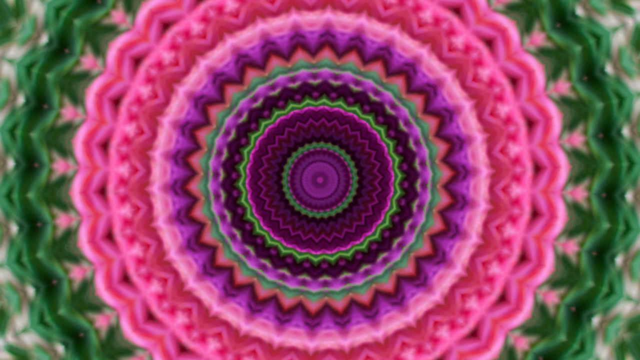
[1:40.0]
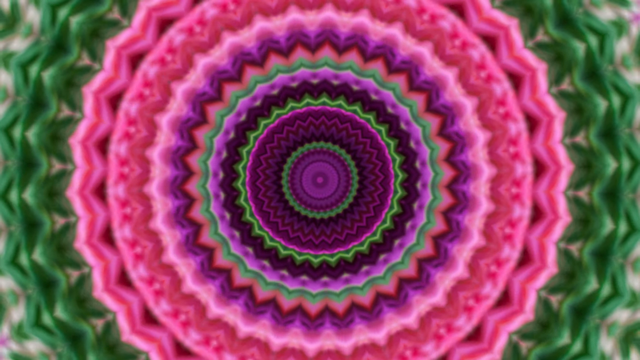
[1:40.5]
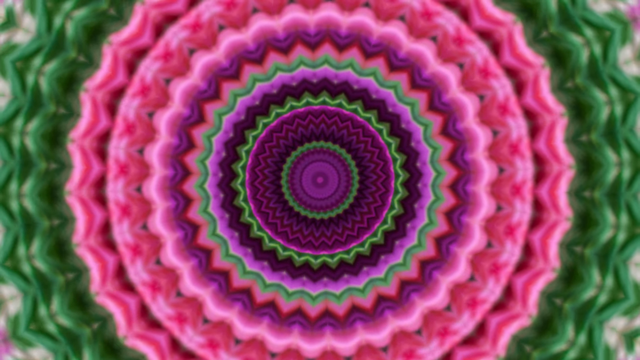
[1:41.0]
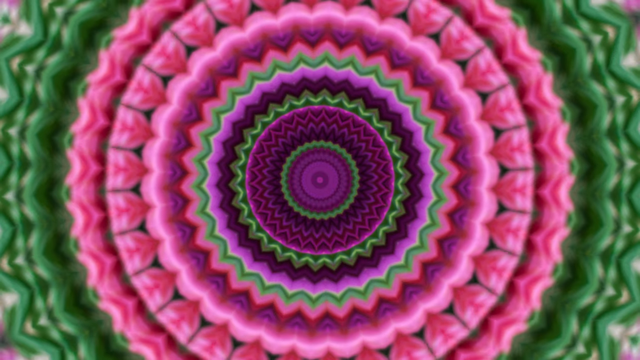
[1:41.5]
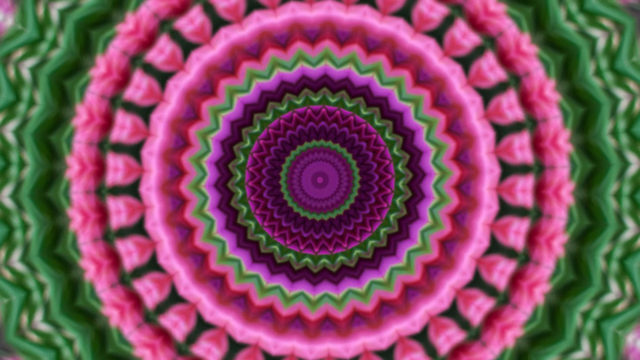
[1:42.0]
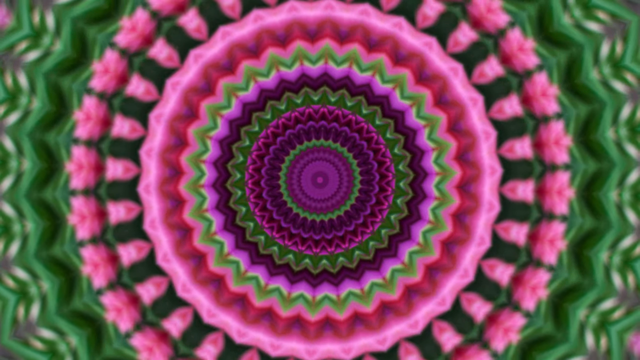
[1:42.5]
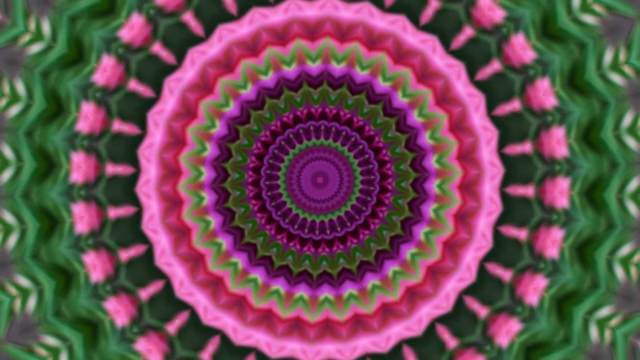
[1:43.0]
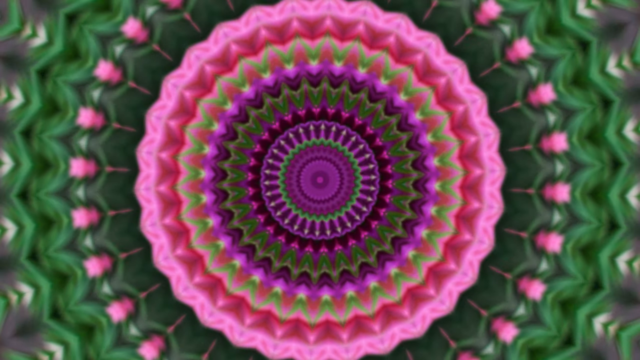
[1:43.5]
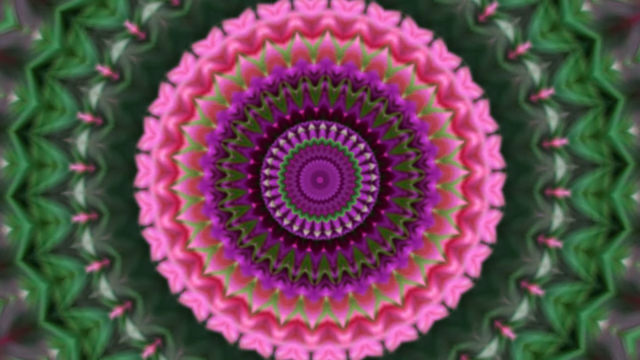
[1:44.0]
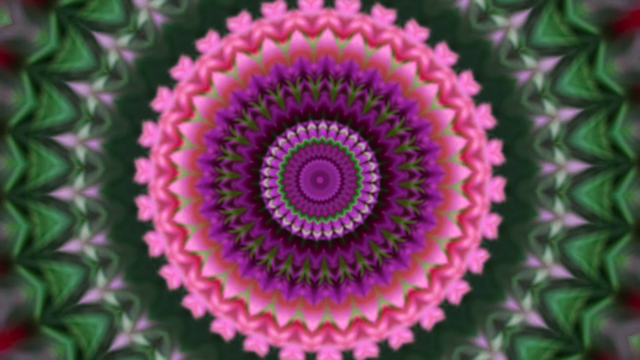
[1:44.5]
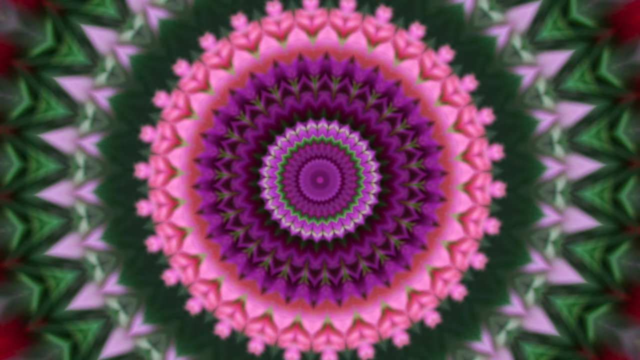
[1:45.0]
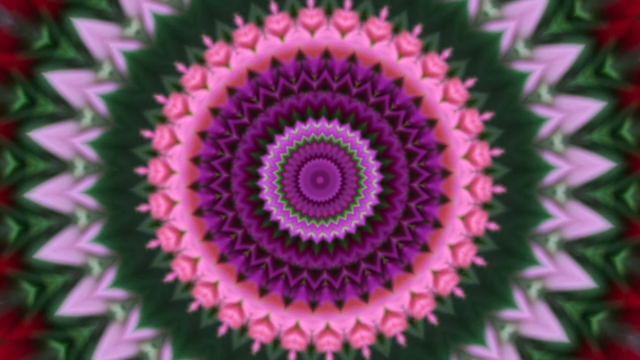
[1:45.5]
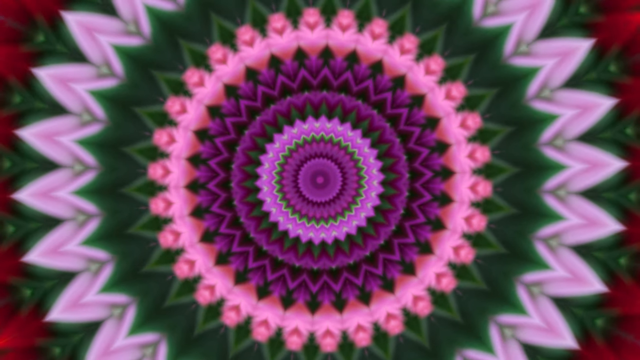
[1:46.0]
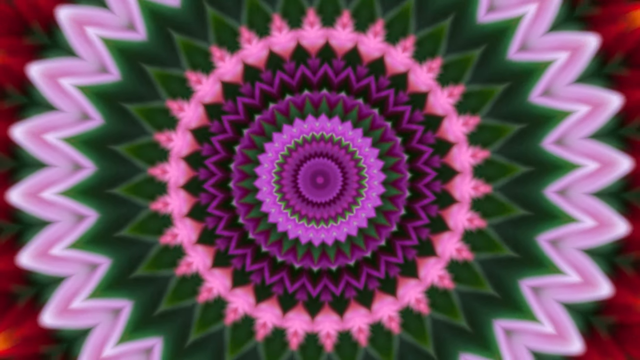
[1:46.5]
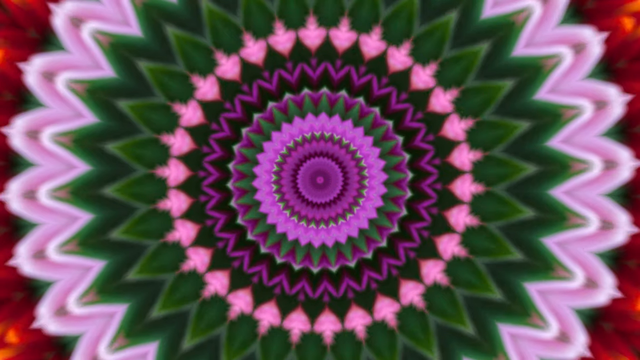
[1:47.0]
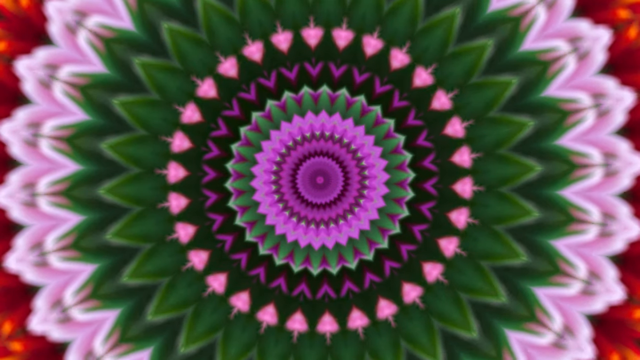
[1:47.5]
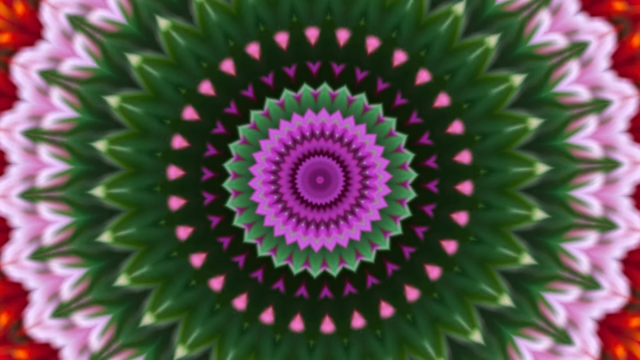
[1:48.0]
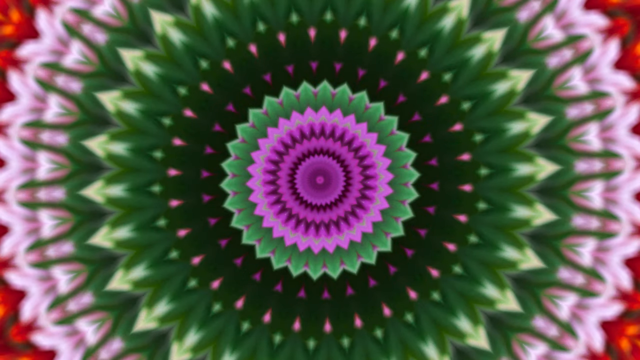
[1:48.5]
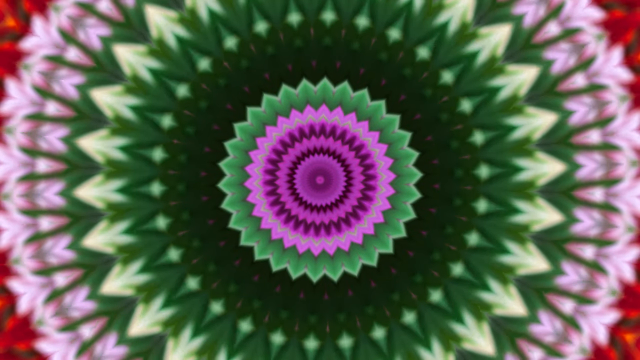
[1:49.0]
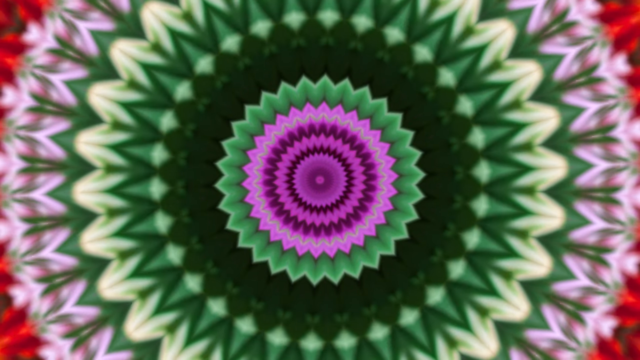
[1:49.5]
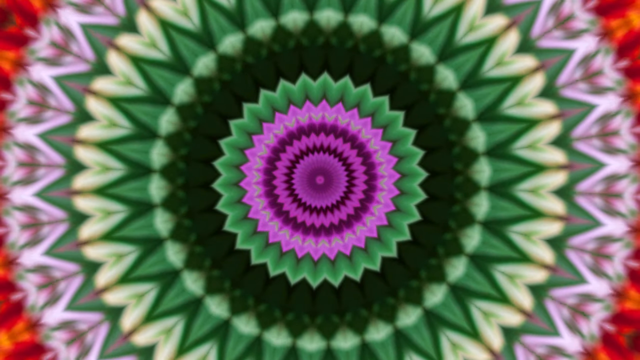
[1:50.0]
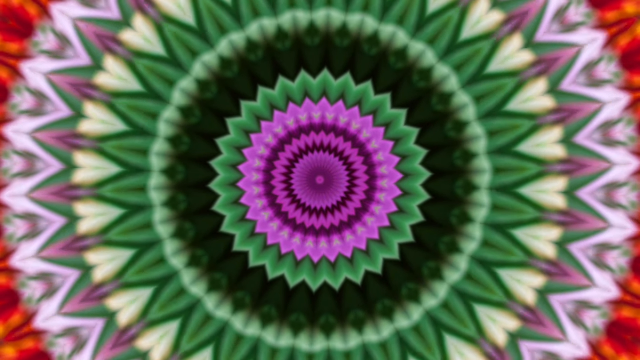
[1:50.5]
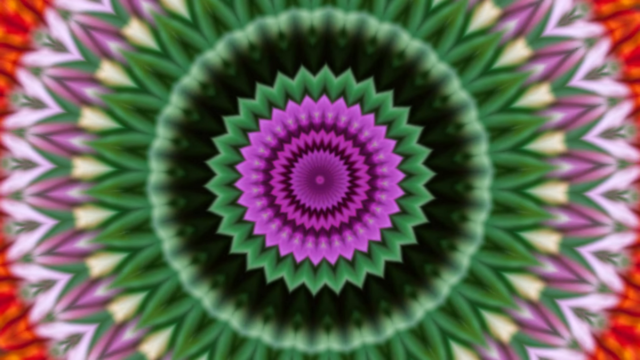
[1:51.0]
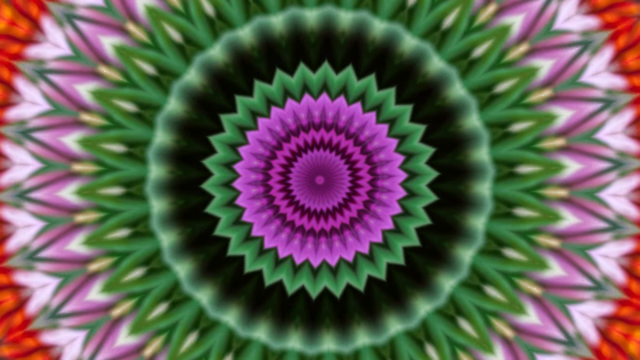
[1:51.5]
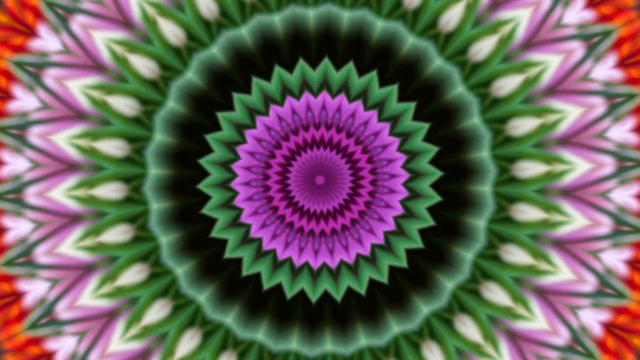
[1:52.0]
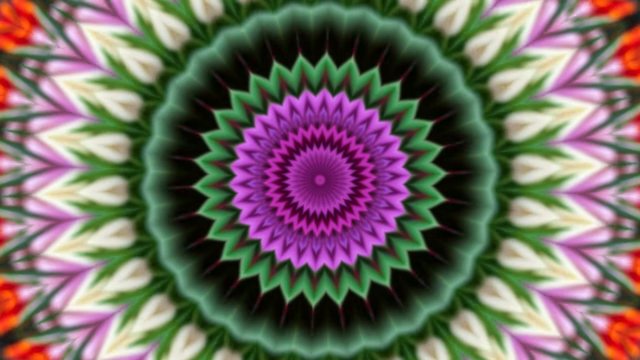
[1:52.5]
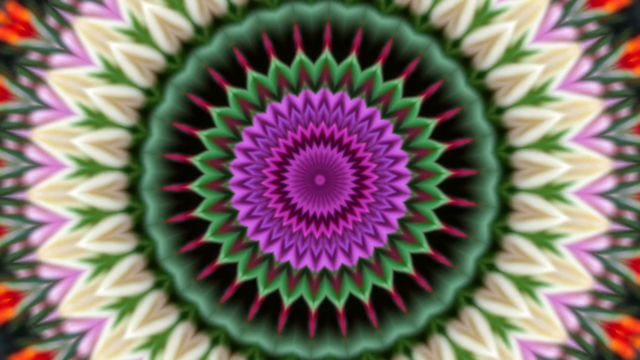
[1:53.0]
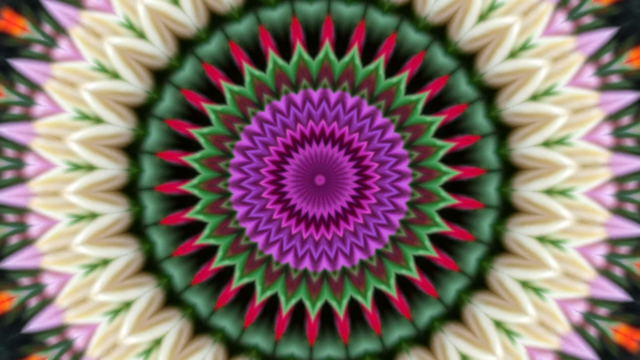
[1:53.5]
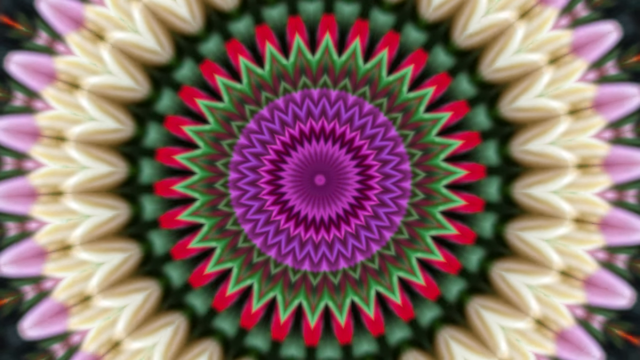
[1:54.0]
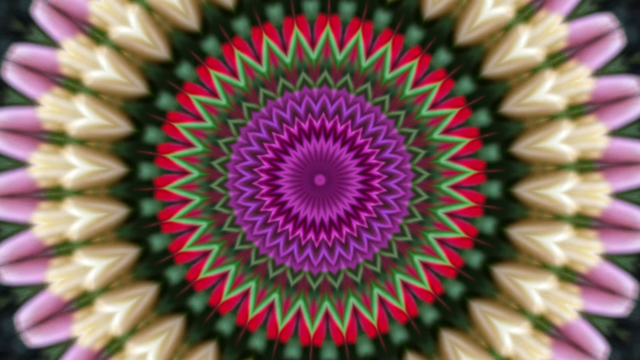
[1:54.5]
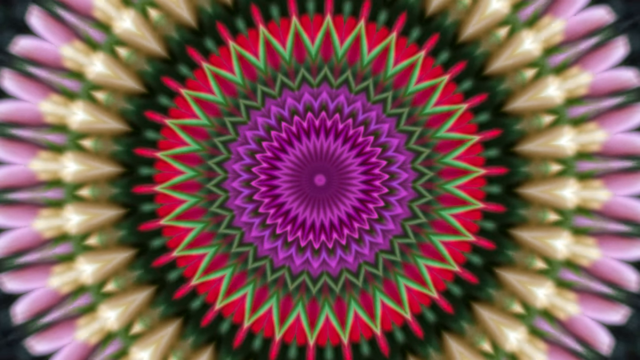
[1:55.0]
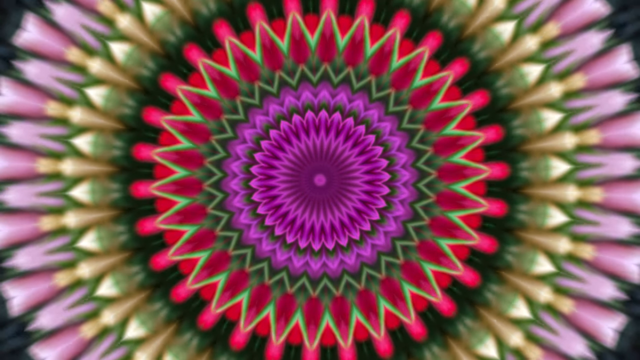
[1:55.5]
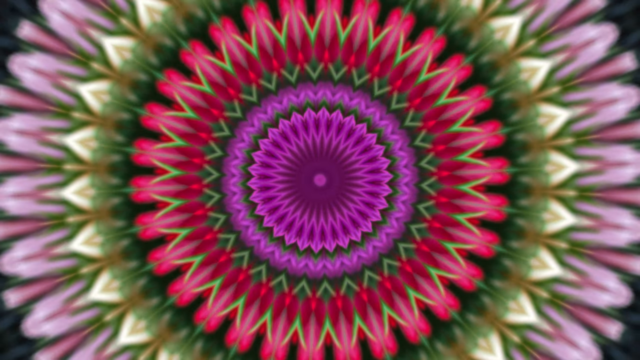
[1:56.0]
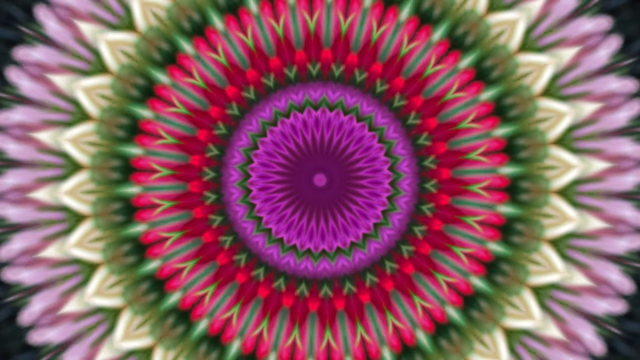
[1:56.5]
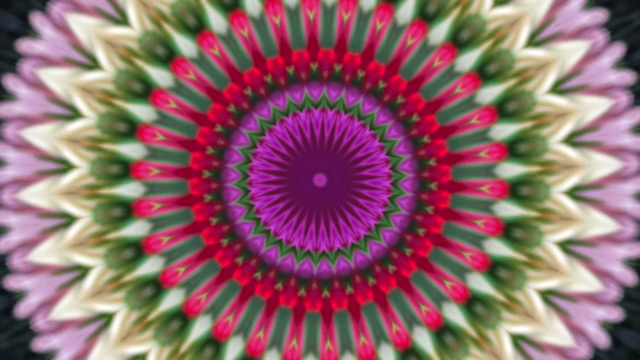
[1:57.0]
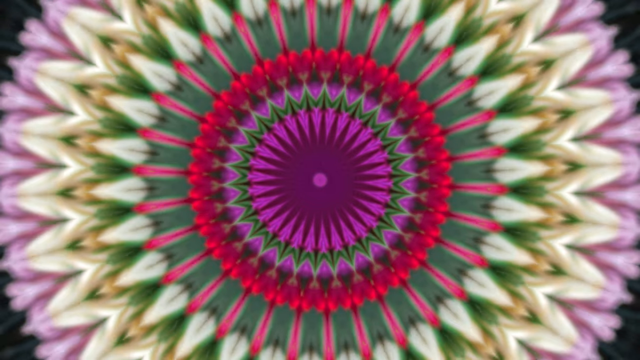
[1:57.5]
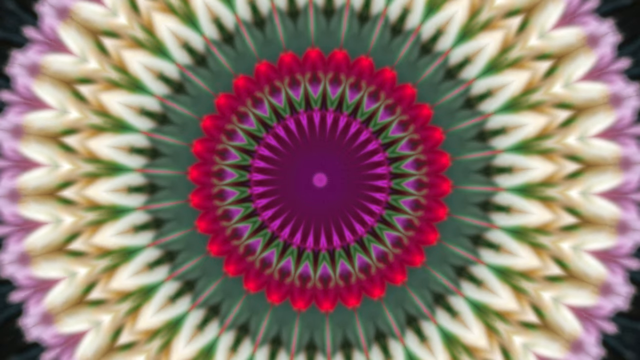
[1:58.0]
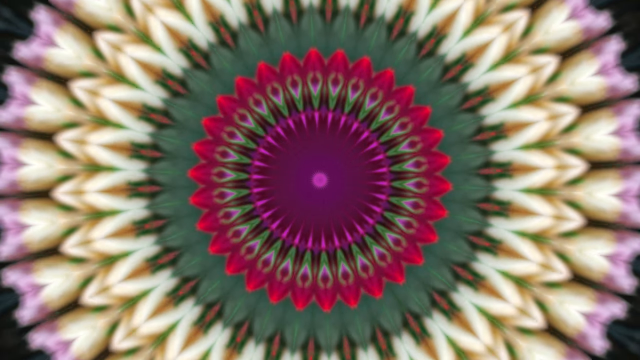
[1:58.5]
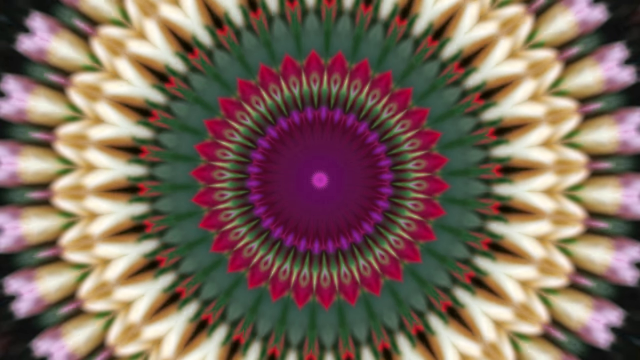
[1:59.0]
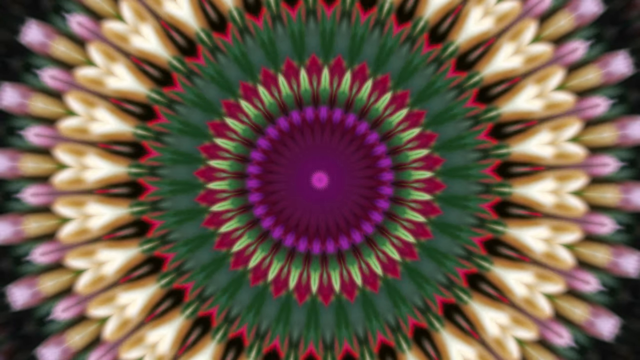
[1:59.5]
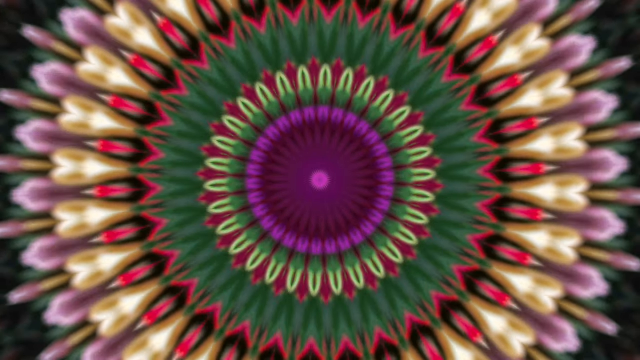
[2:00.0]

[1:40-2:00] Part of the pink ring engulfs with the green ring, and together they seem to look a bit flower-like. The inside of the pink ring also seems to form flower-like petals that dissipate and turn green. Lighter pinkish-purple arrow-like designs come onto the outside of the circle and start to become rounded. Overall, the image is mostly green and pink, and it looks like some red is about to come into the image. The shapes and designs seem to get less and less intricate, and the video seems to move more toward the center. A light pale color morphs with the mint green, and the center starts to become more red rather than pinkish-purple. Eventually the designs seem to go out in a petal-type shape at the end.